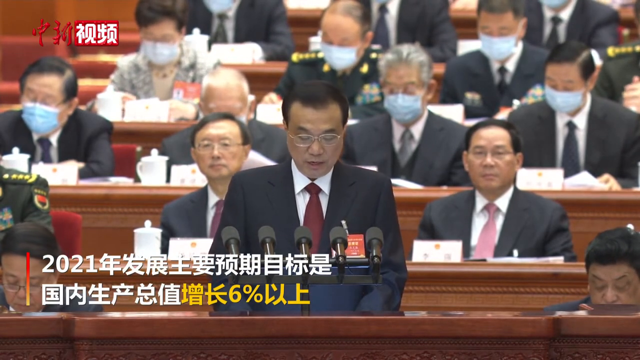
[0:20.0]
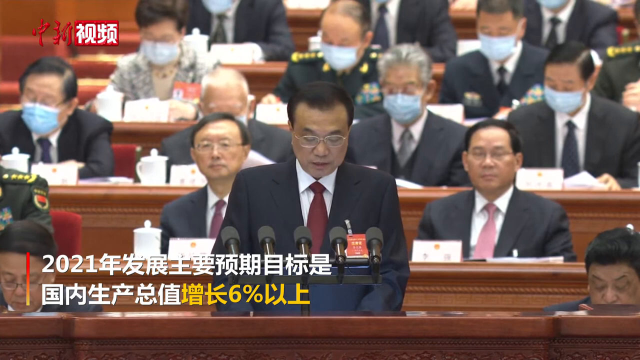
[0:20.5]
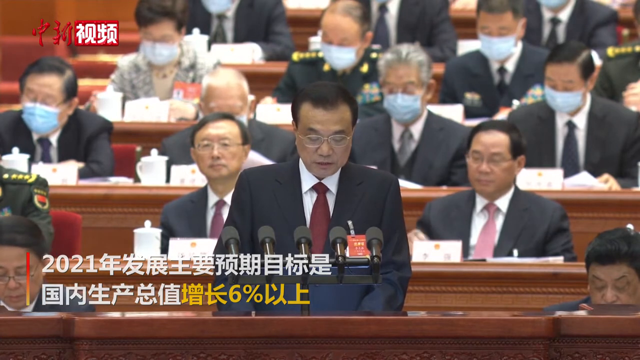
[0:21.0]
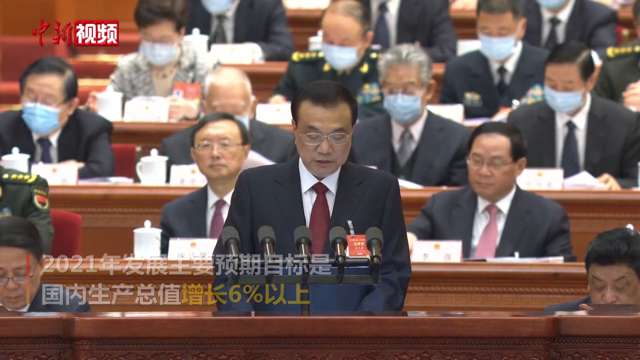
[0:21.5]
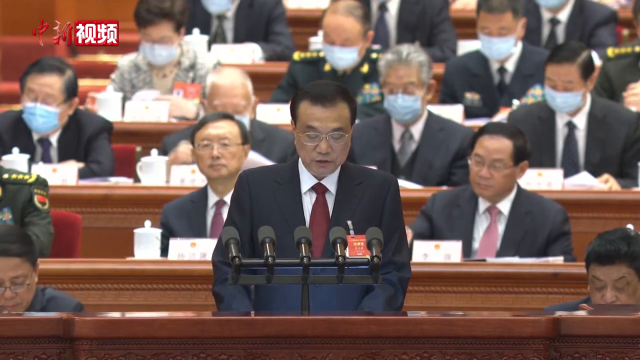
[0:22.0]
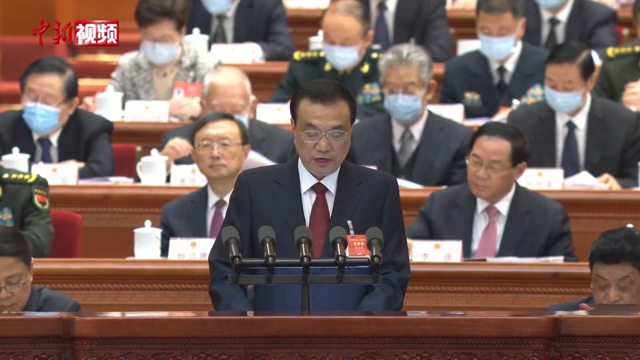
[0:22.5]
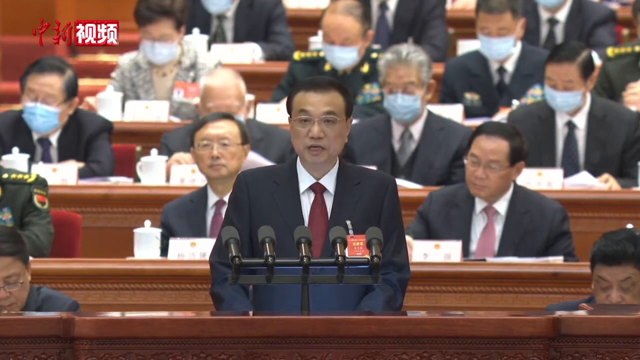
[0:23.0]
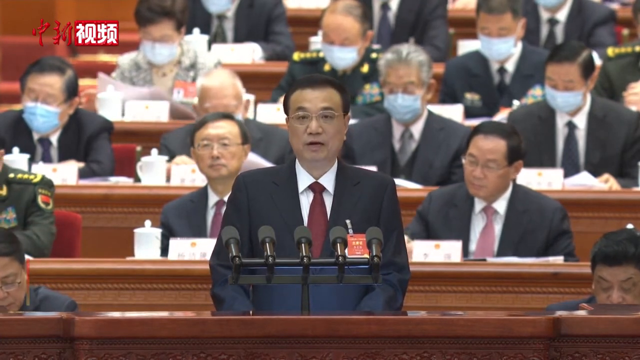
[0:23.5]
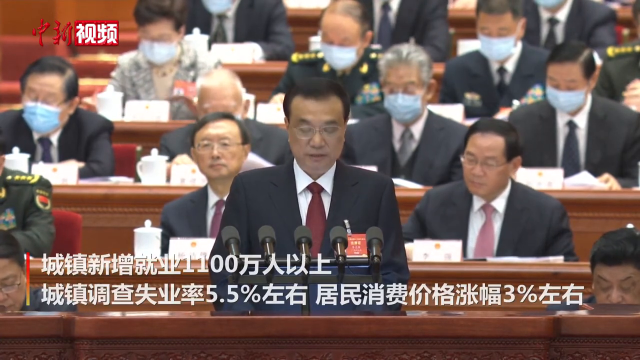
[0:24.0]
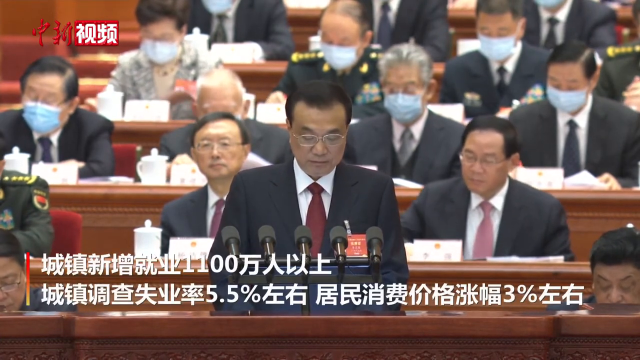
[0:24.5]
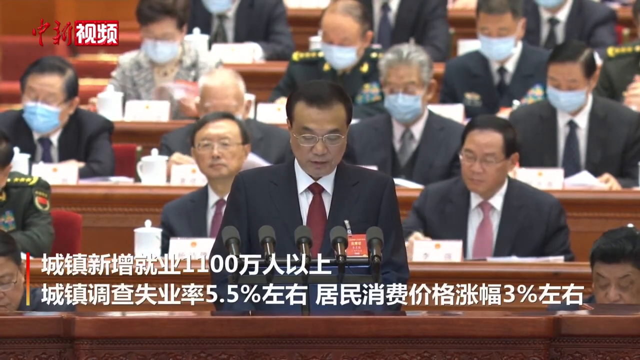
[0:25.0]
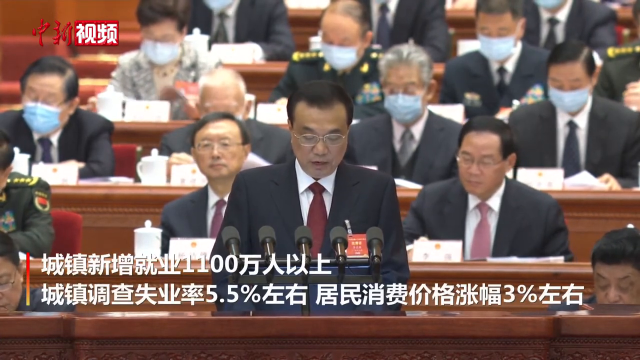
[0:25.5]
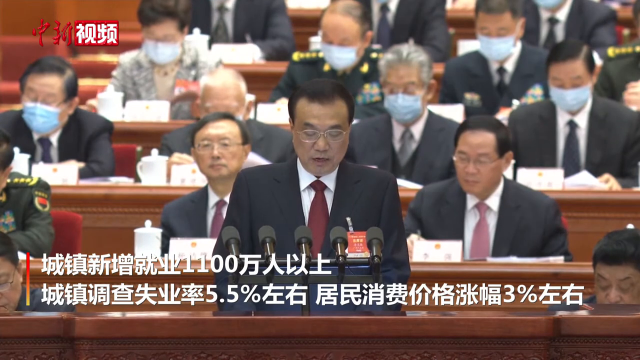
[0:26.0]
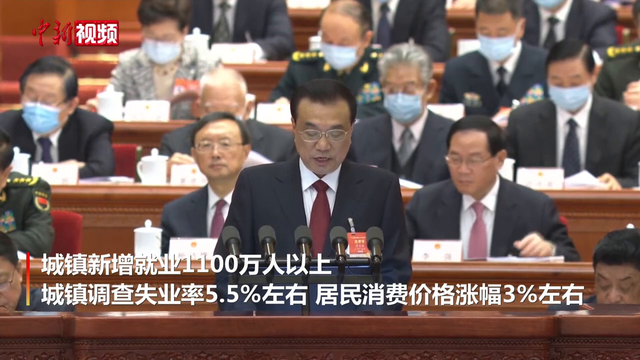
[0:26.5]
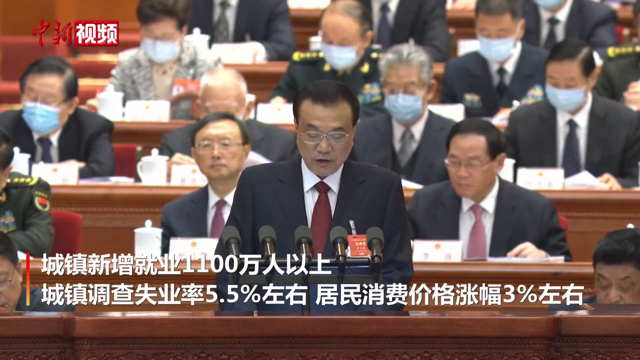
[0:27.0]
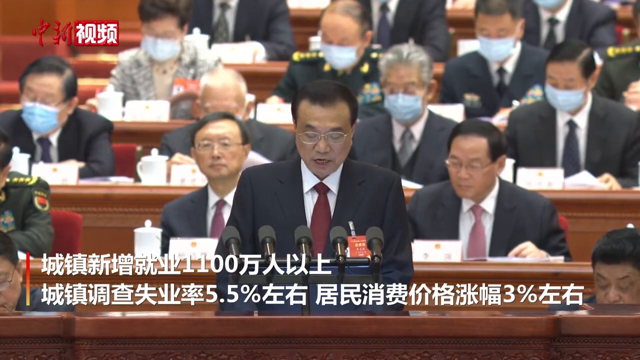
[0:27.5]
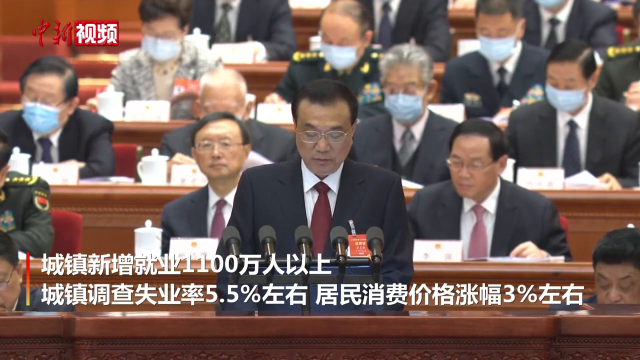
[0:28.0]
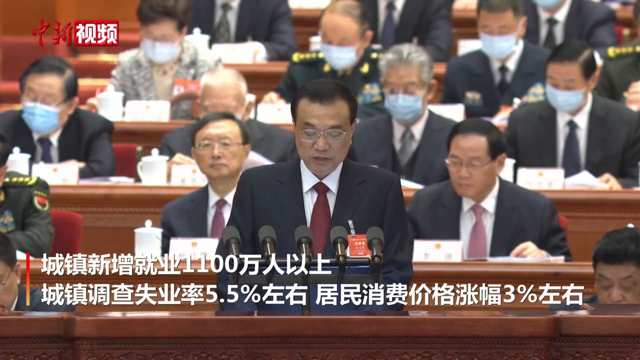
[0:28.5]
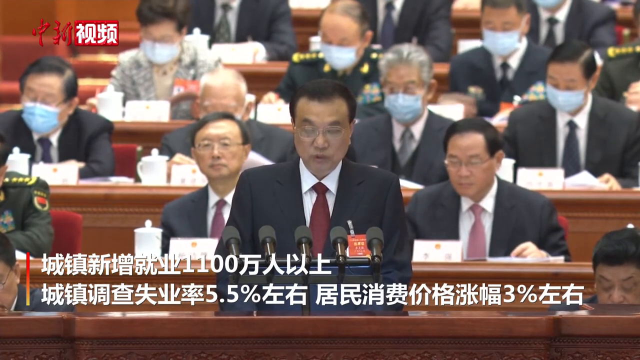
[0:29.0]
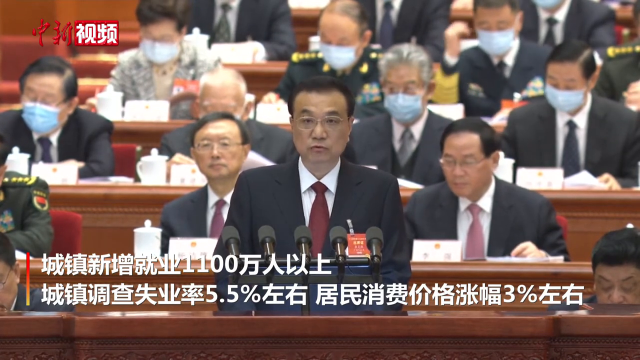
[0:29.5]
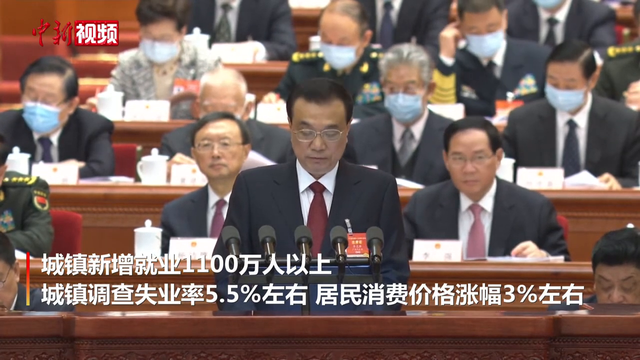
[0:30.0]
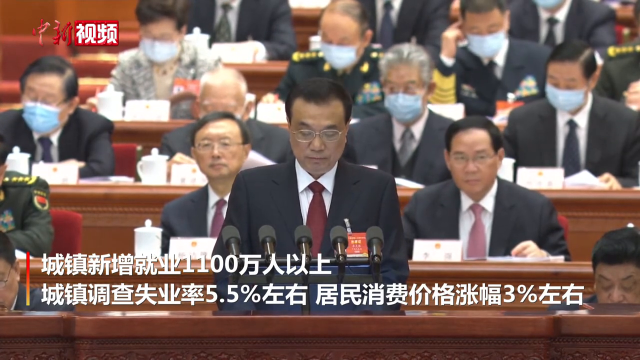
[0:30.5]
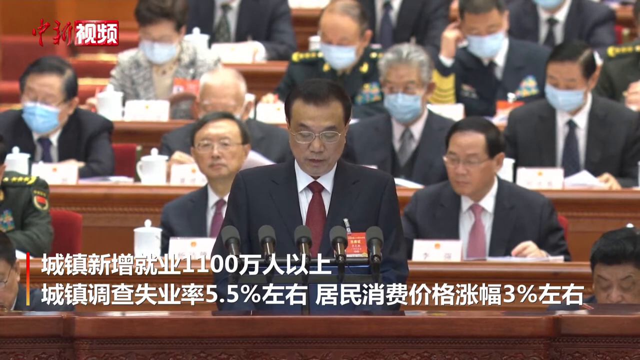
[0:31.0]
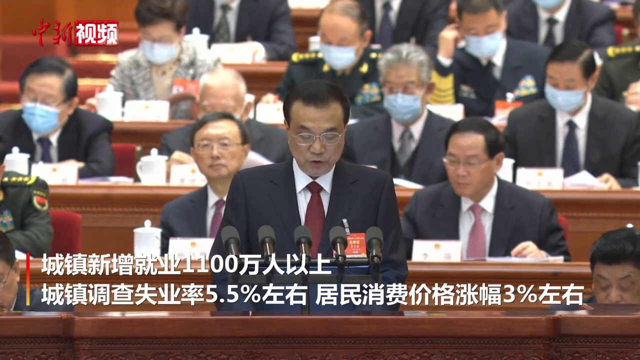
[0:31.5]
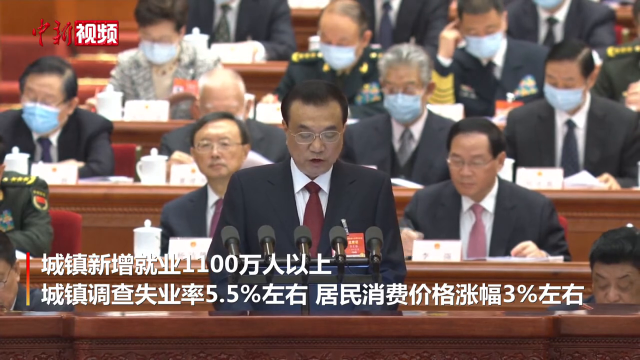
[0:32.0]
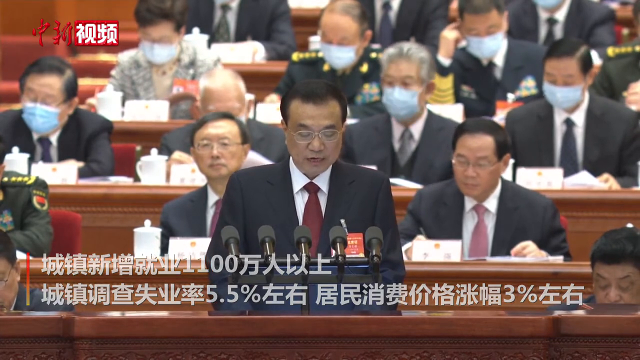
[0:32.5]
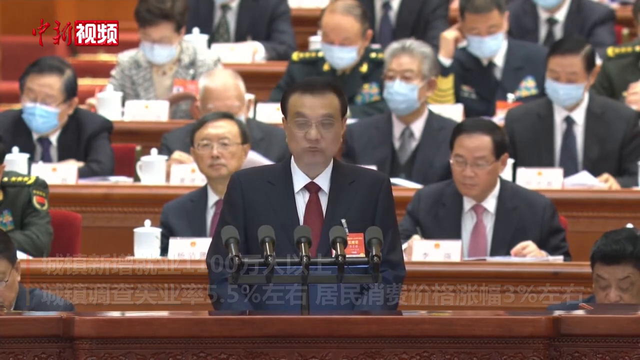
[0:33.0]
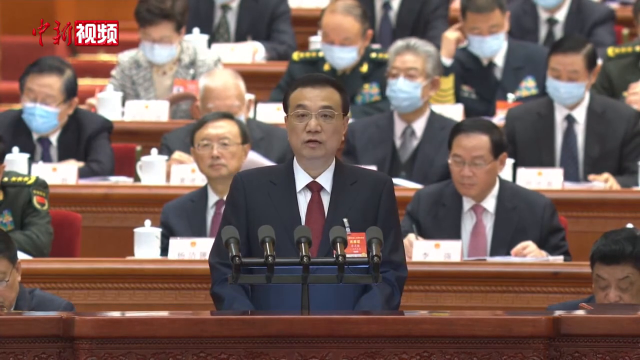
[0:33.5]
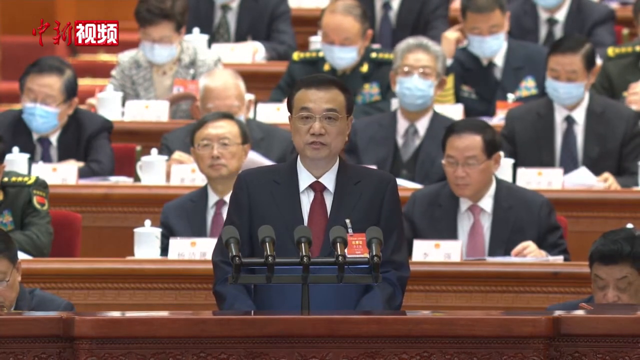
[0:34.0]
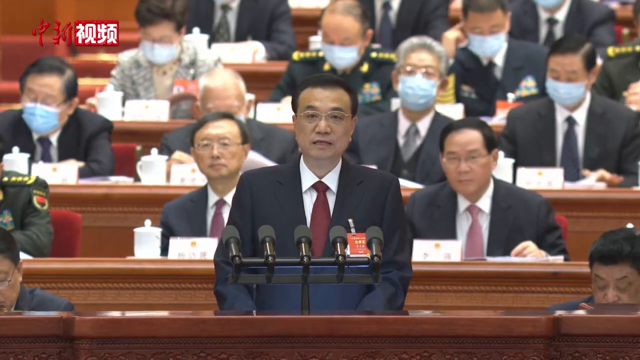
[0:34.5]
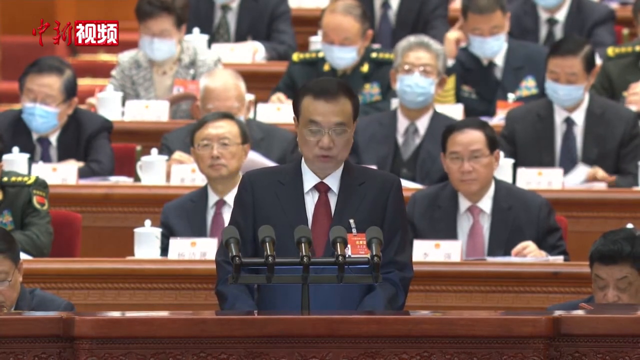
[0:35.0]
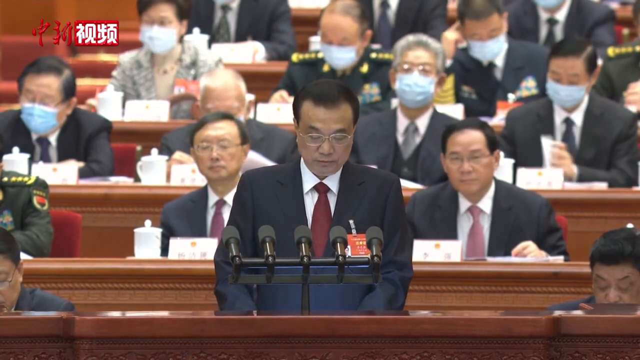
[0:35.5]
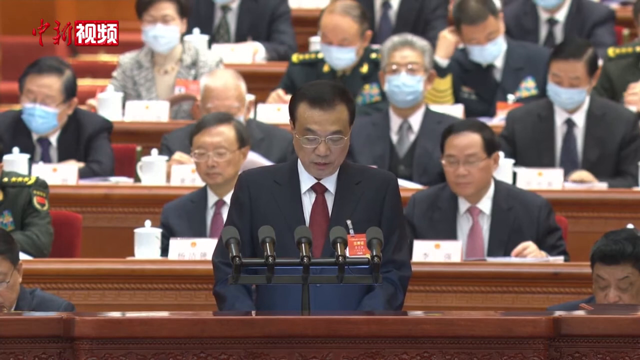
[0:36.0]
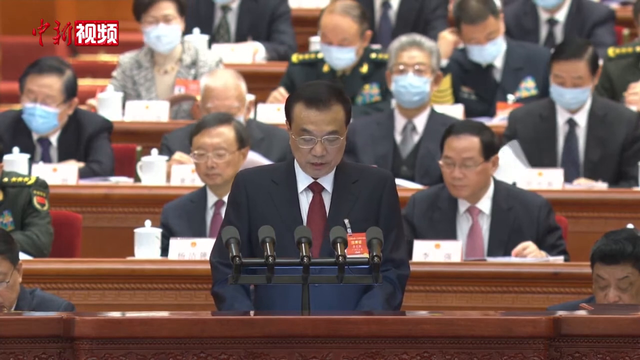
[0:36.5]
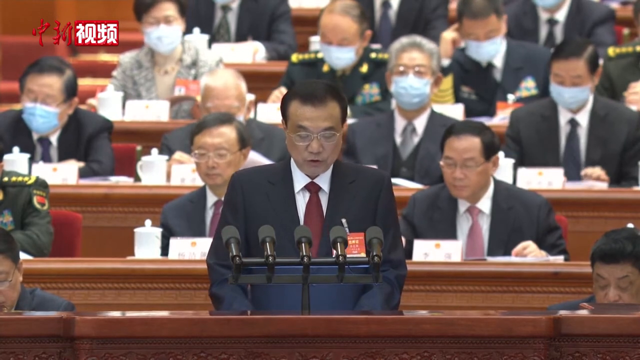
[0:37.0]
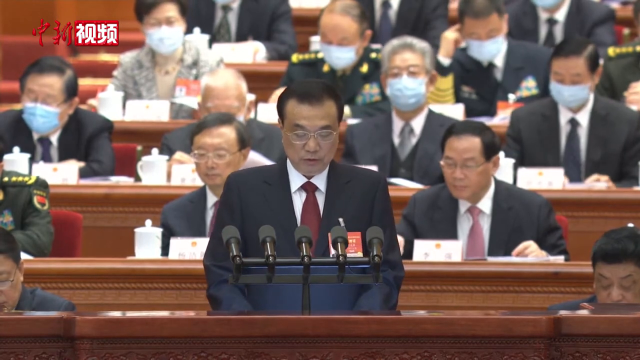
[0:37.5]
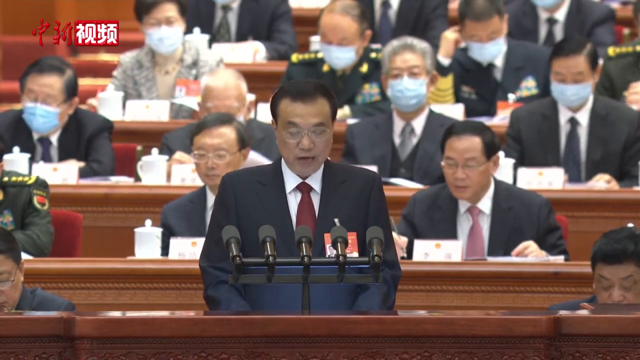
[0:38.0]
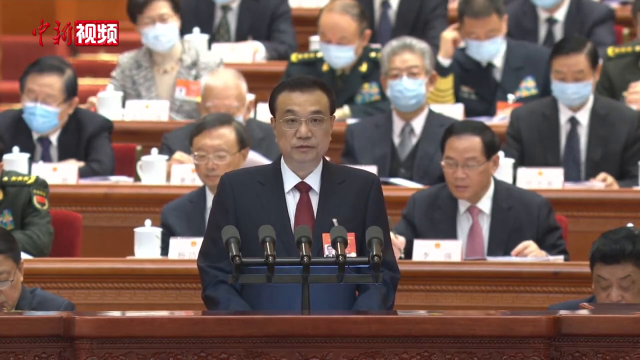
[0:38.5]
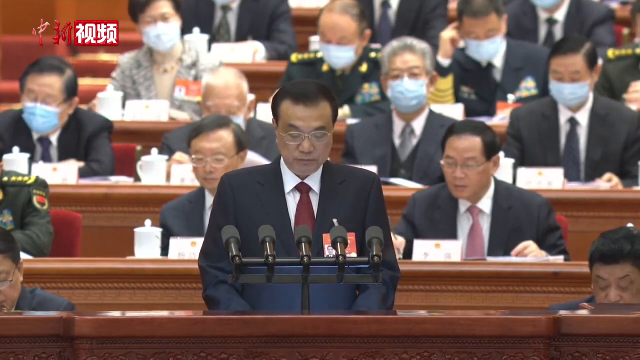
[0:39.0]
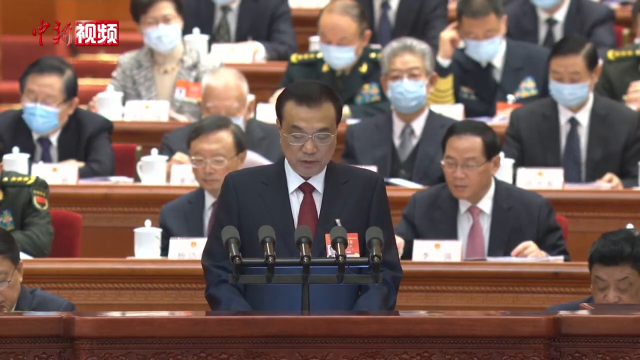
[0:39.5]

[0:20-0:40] A man speaks in front of a very large group of people. He is looking down, apparently at notes in front of him that he refers to as he speaks. He has black hair and black eyebrows, and wears wire-rimmed glasses, a white collared button-down shirt, a maroon necktie and a black suit. Some of the people sitting behind him appear to be looking straight ahead, while others appear to be looking at work on the desks in front of them. The man speaks intently, looking up at his audience and back down at his notes. Some of the people behind him look like they are paying close attention to him, and some look like they are working on other things.